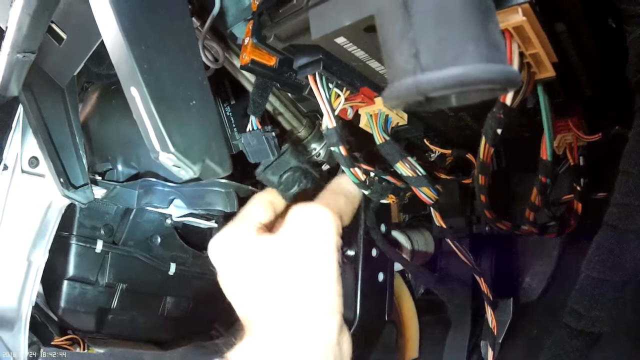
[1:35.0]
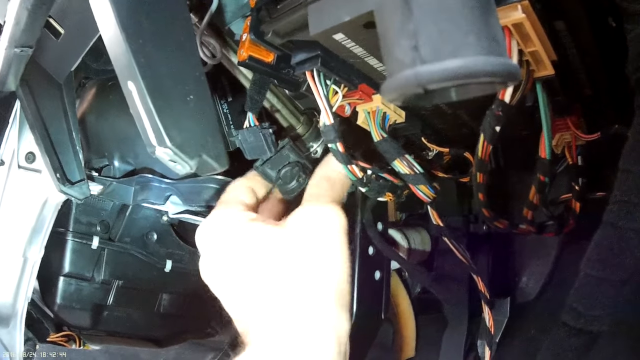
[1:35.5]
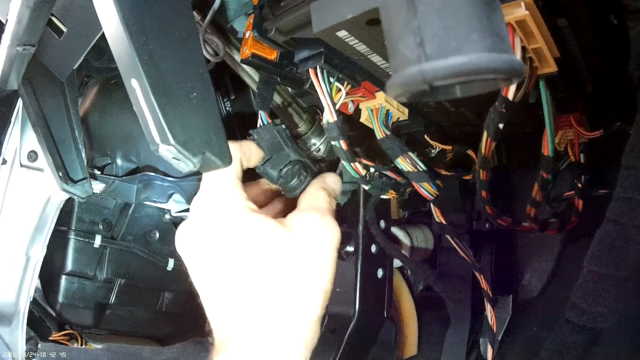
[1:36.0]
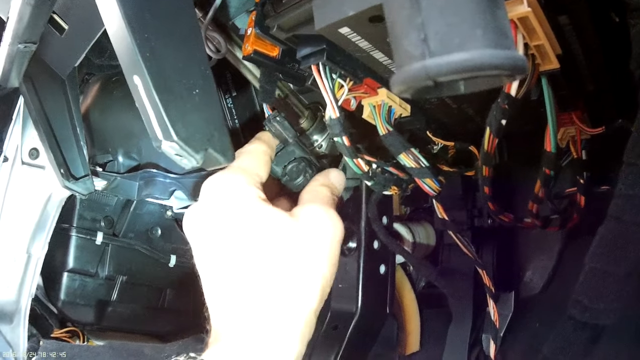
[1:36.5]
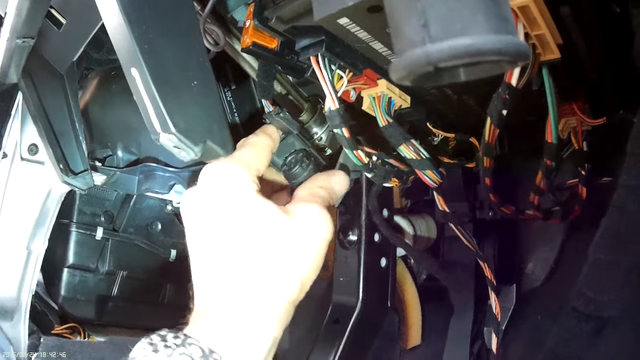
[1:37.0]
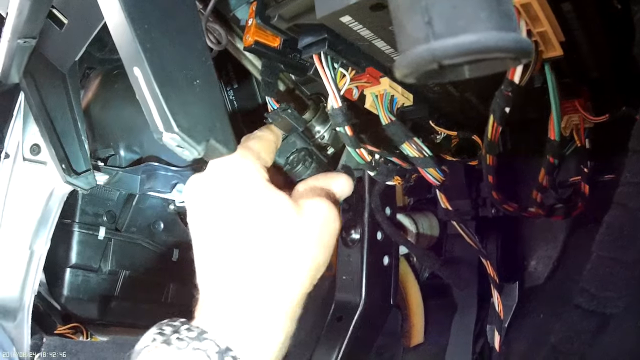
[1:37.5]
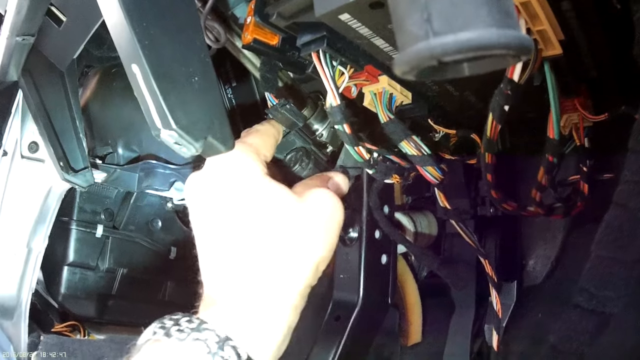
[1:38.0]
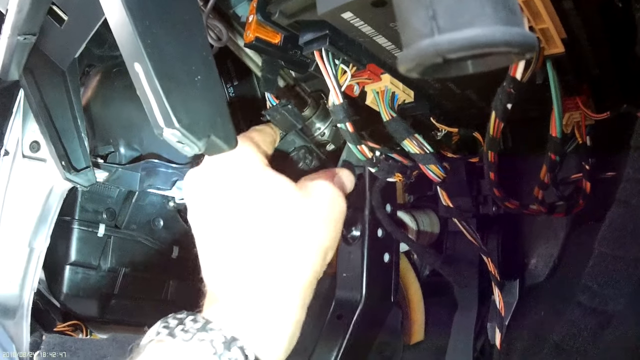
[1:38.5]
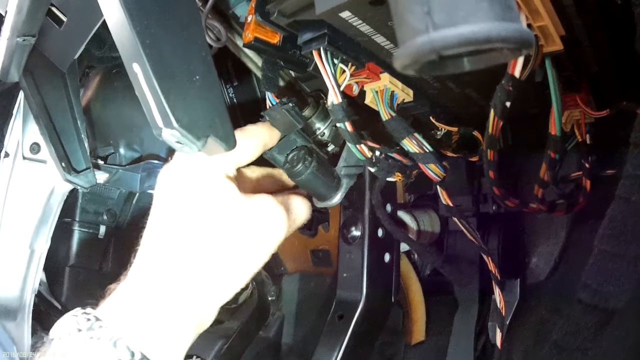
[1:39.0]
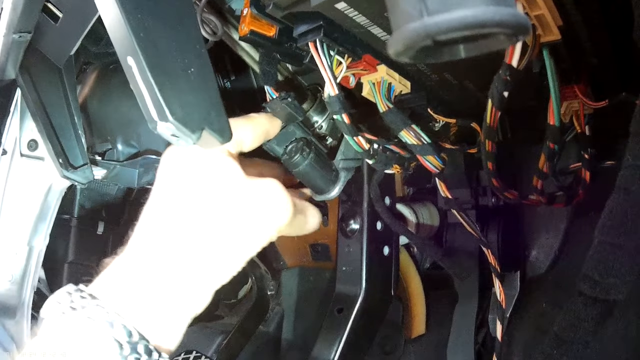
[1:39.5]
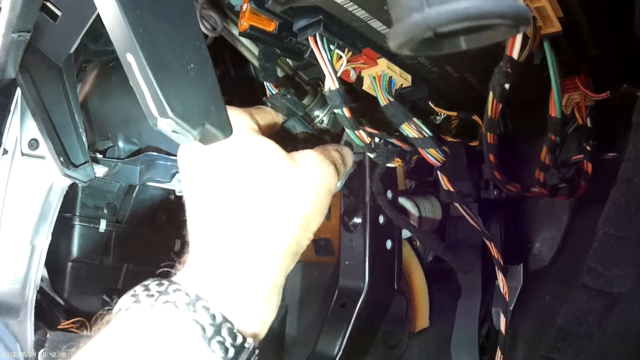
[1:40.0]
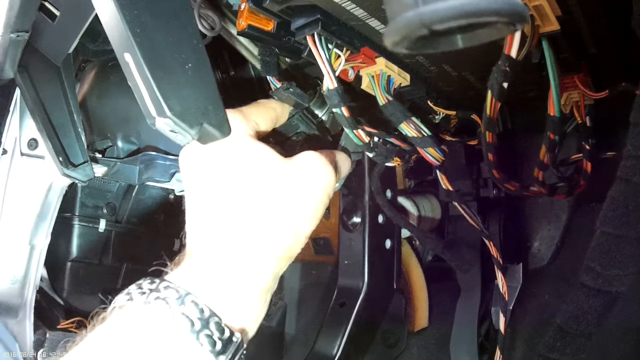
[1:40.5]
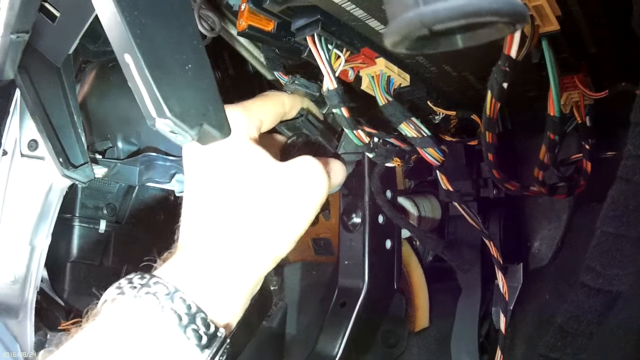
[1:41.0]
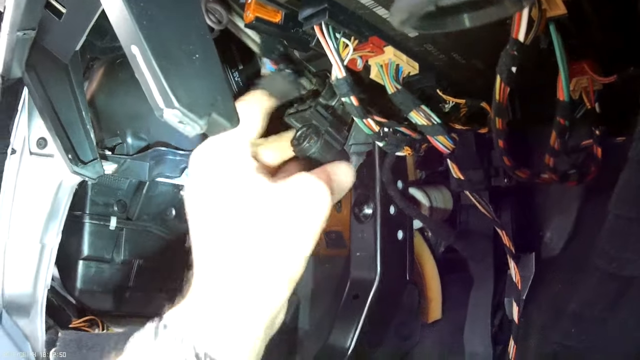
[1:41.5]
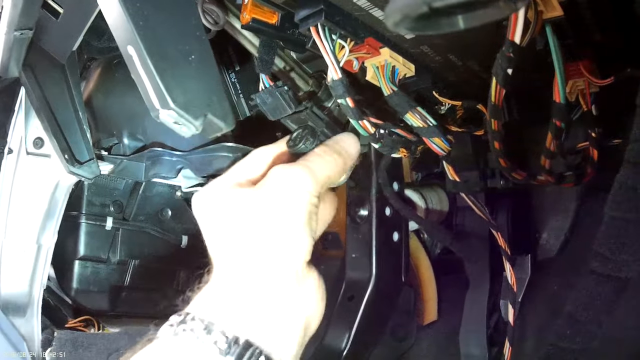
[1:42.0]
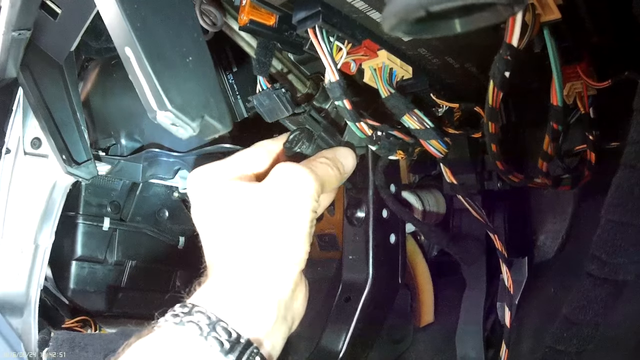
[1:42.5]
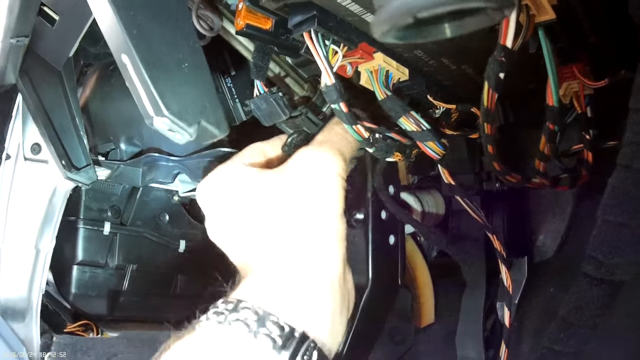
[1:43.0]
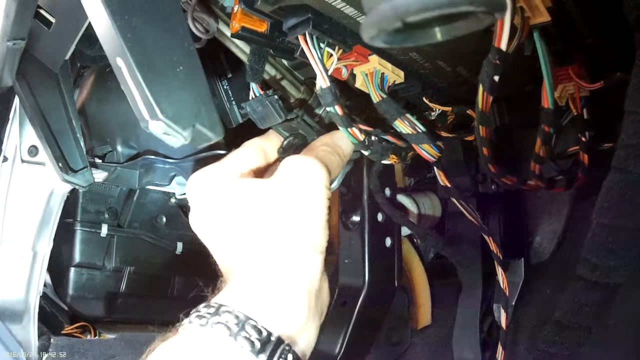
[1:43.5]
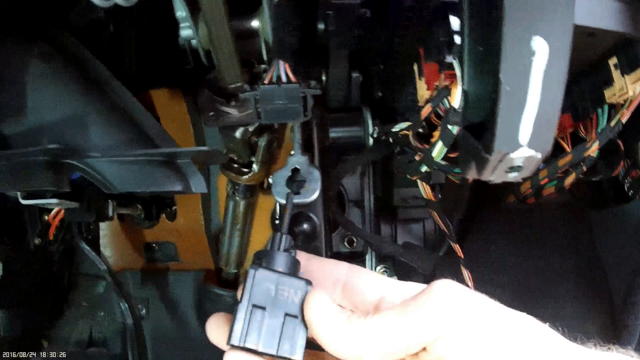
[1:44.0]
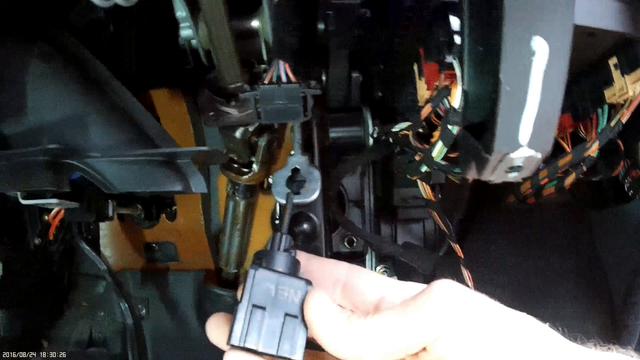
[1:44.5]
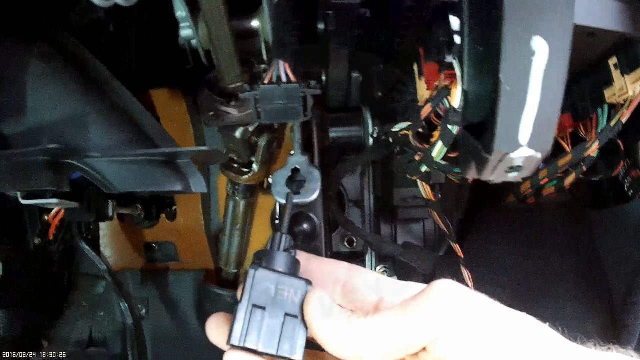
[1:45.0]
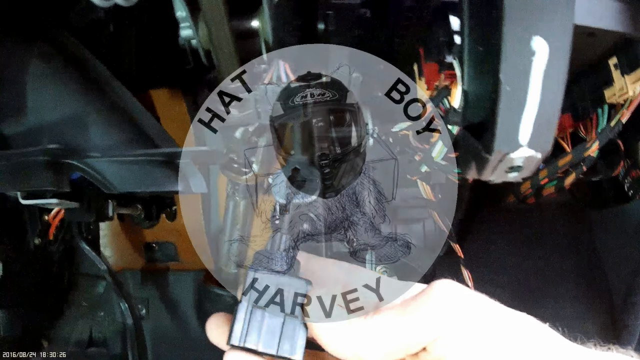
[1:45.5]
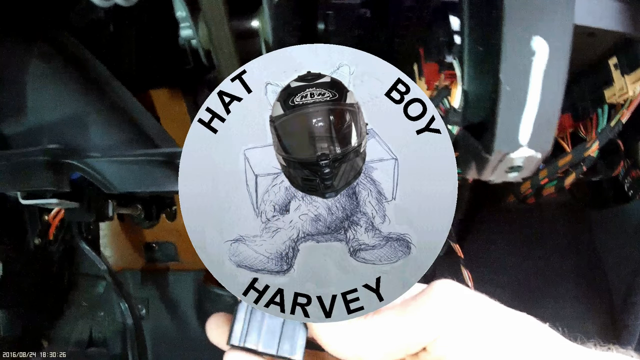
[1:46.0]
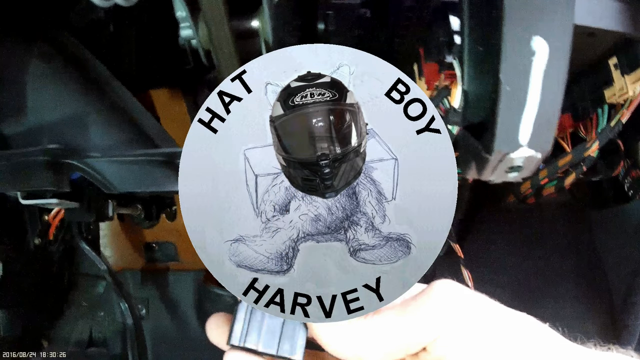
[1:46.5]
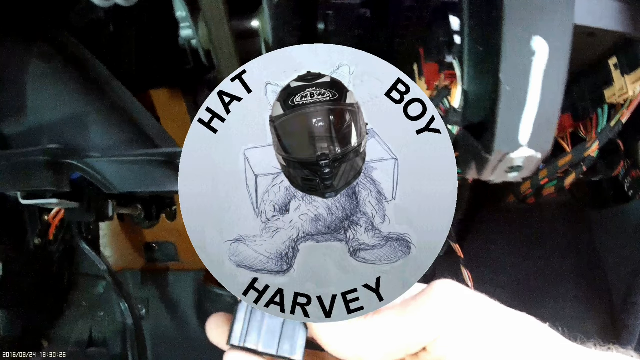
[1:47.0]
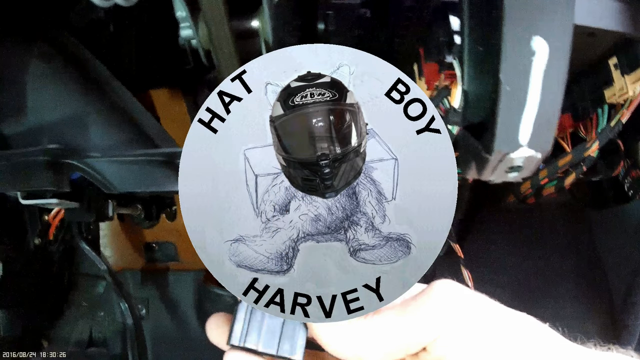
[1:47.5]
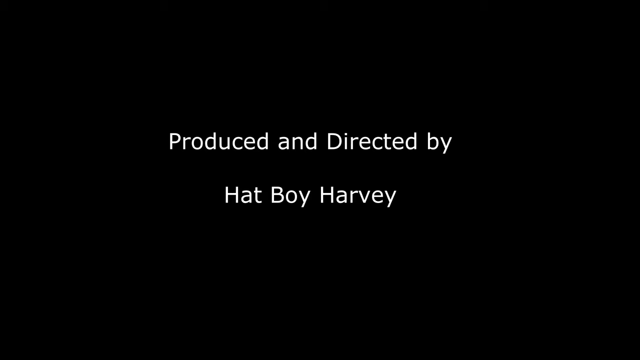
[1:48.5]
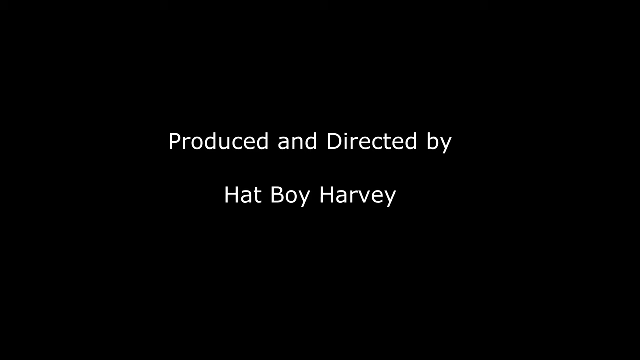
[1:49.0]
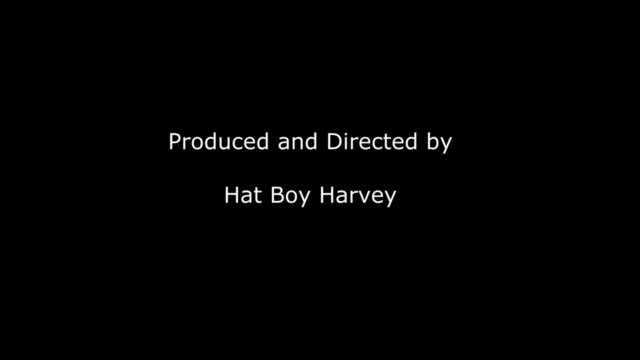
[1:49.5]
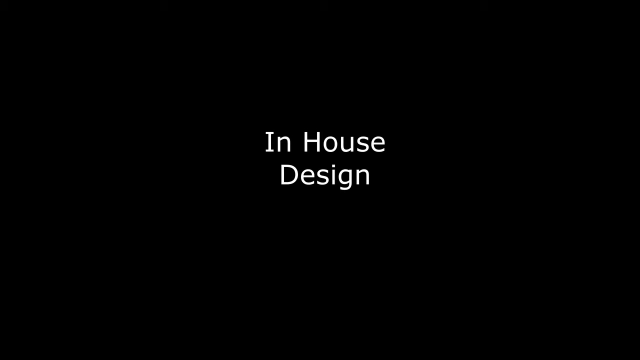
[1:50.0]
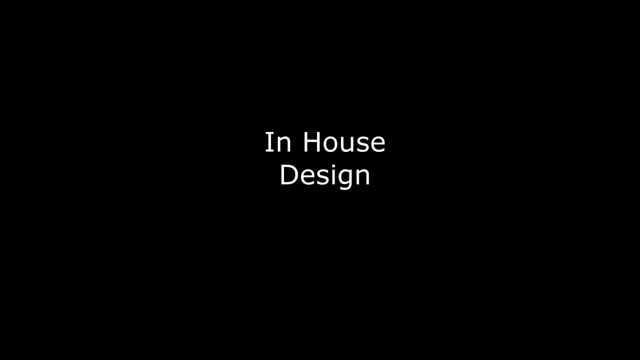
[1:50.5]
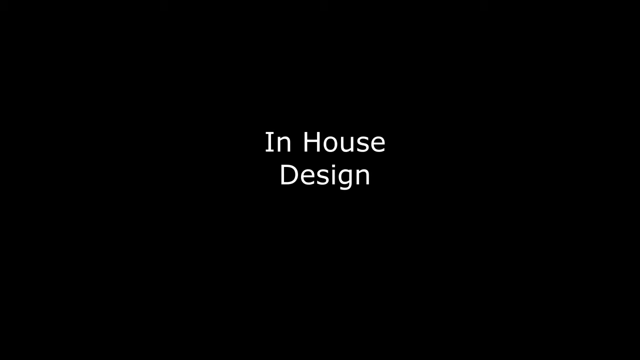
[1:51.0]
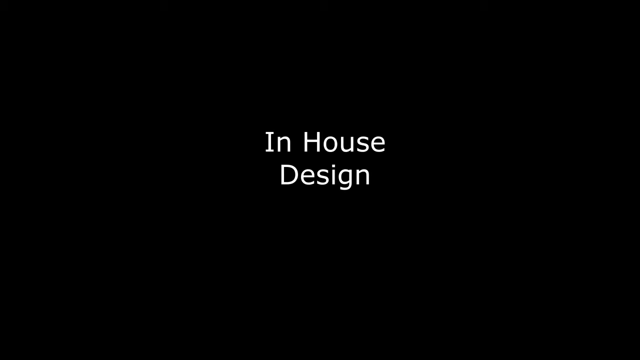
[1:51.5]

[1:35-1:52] A subscribe button pops up in the lower right corner of the frame. The man continues to screw in the piece; once it appears somewhat locked in, he turns it clockwise to lock it. It then appears ready to be plugged back in. Afterward, a watermark of Hat Boy Harvey, the teddy bear wearing a biker helmet, appears, and the words "produced and directed by Hat Boy Harvey in-house design" are written at the end.